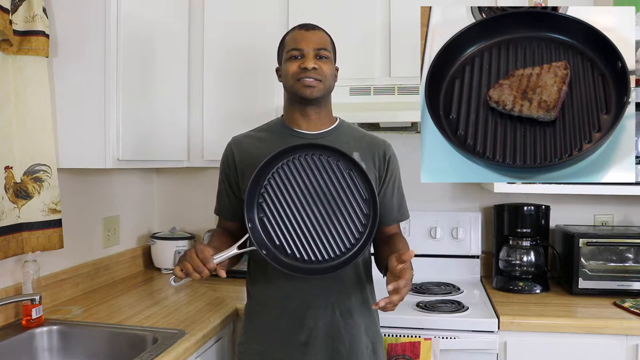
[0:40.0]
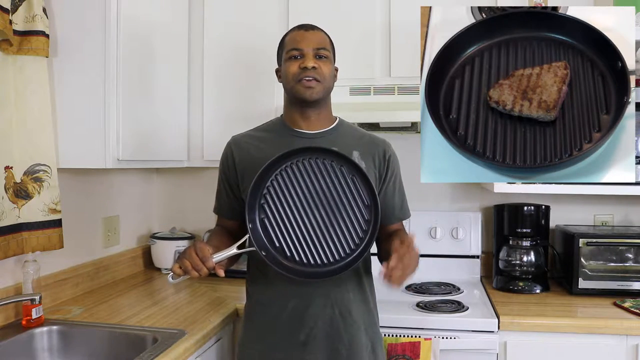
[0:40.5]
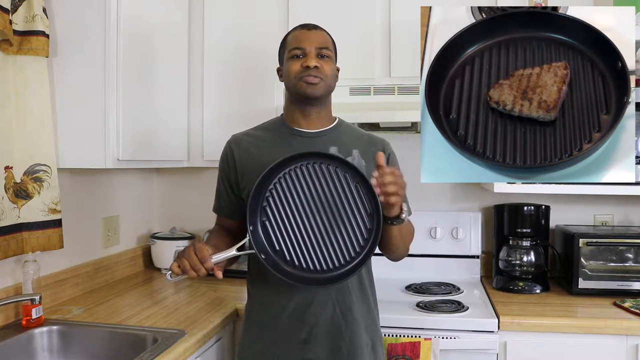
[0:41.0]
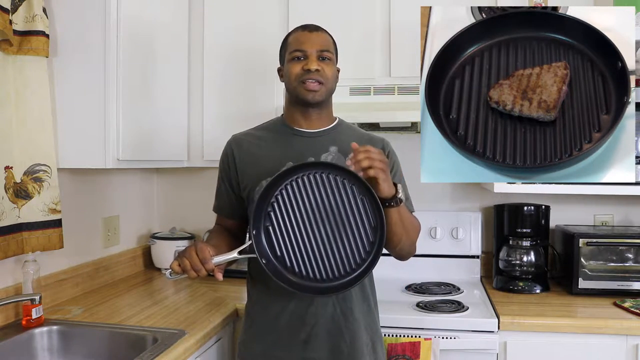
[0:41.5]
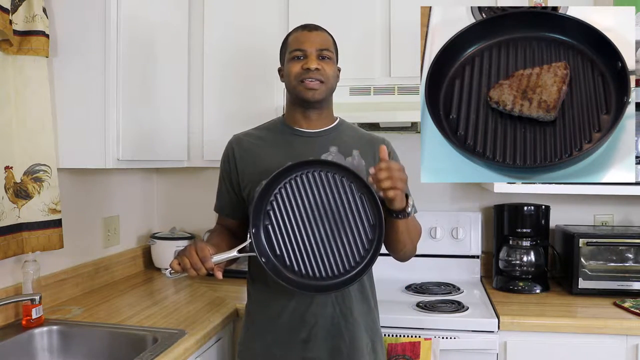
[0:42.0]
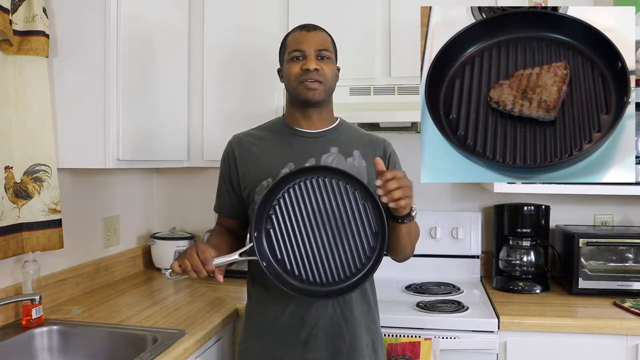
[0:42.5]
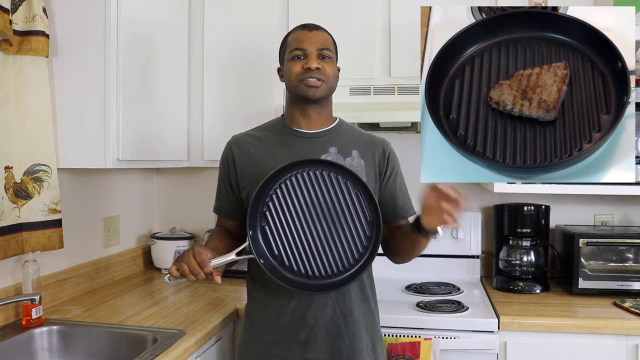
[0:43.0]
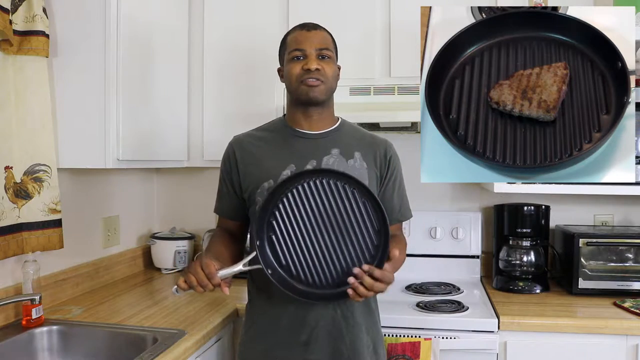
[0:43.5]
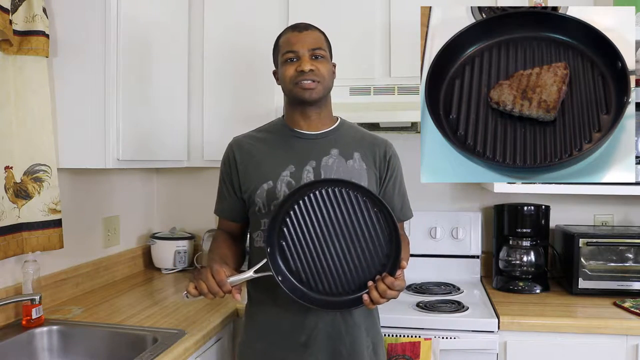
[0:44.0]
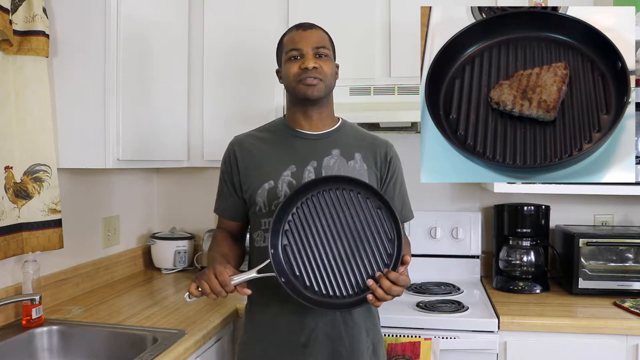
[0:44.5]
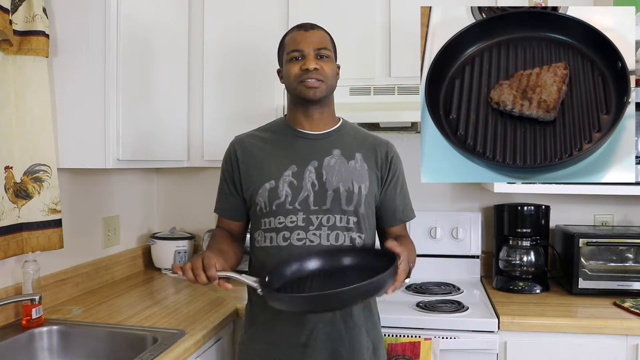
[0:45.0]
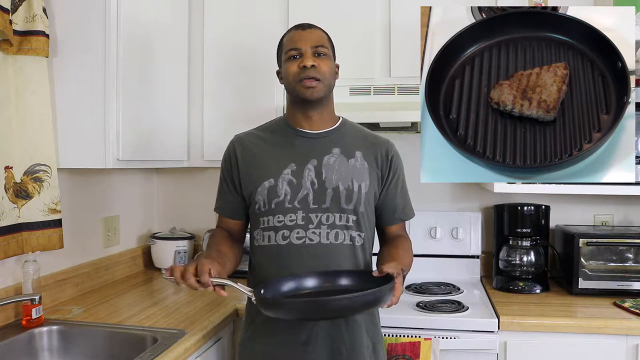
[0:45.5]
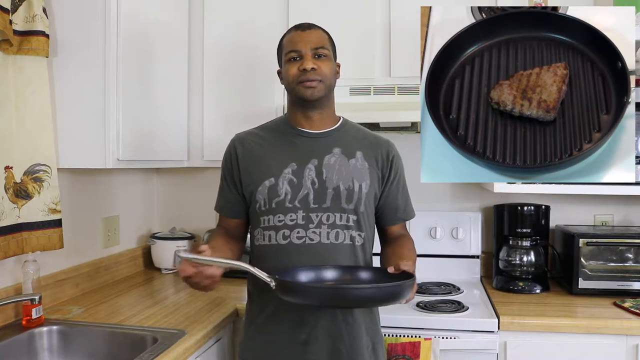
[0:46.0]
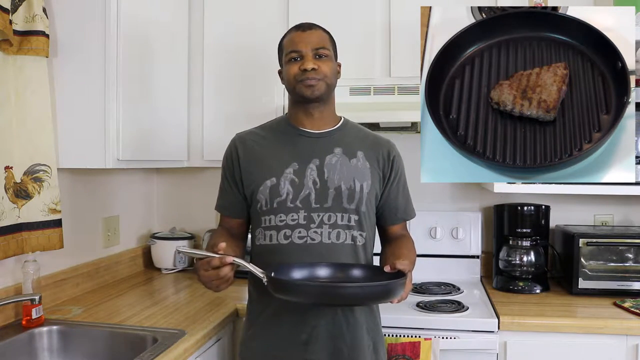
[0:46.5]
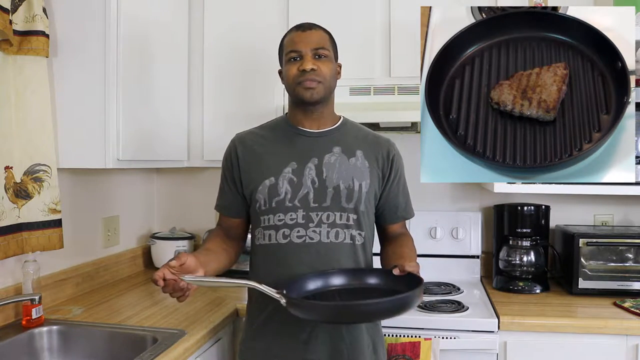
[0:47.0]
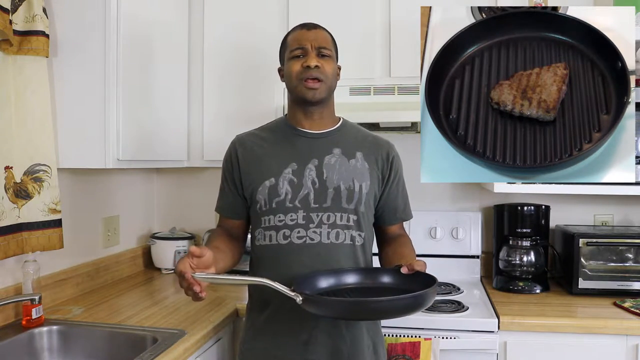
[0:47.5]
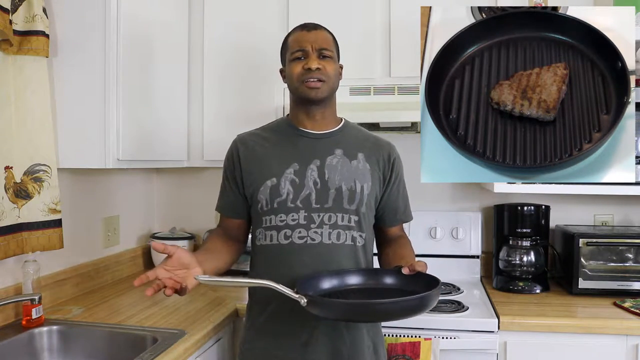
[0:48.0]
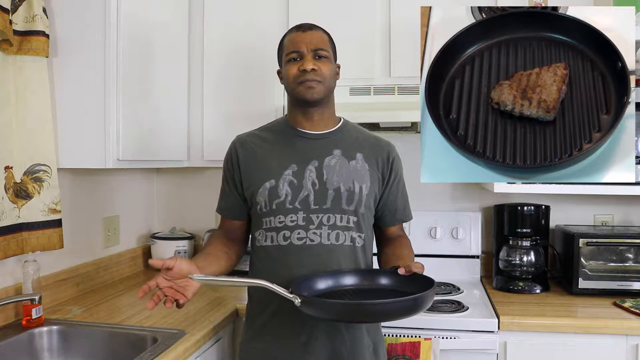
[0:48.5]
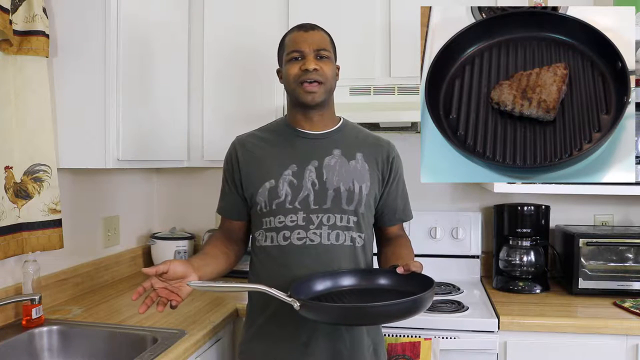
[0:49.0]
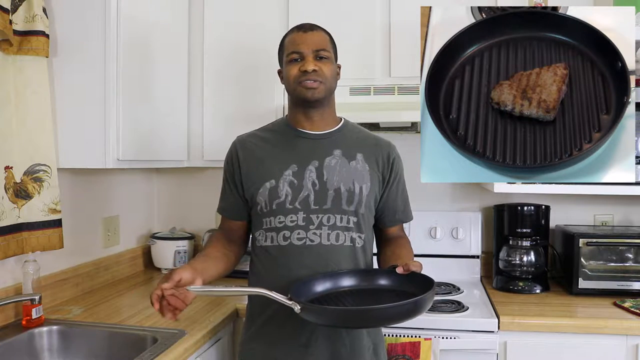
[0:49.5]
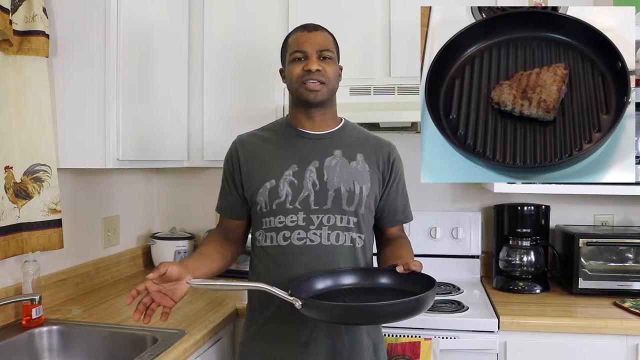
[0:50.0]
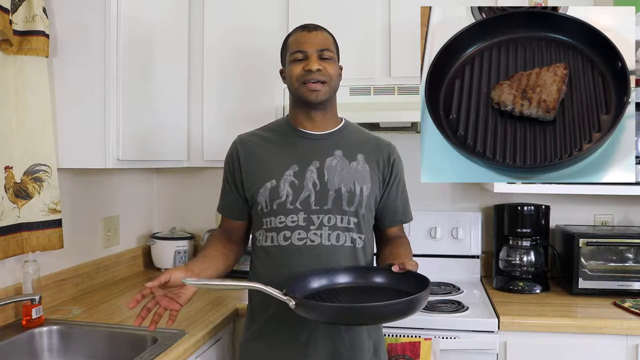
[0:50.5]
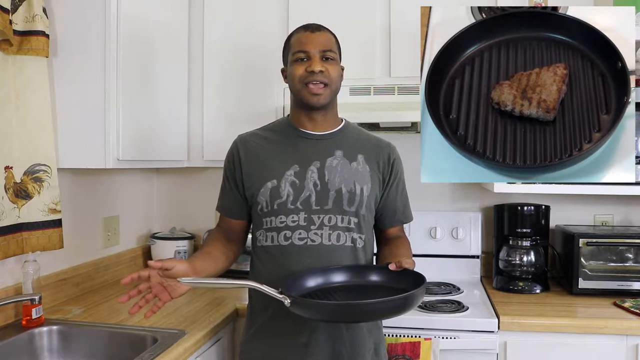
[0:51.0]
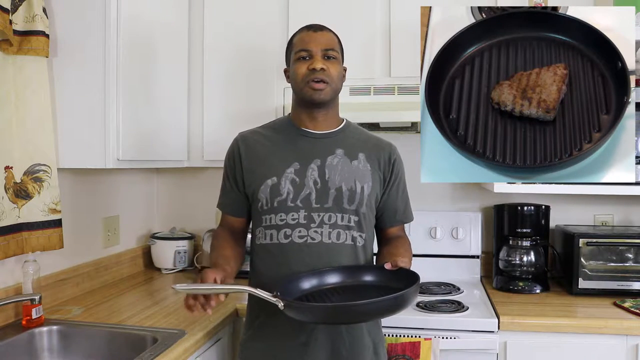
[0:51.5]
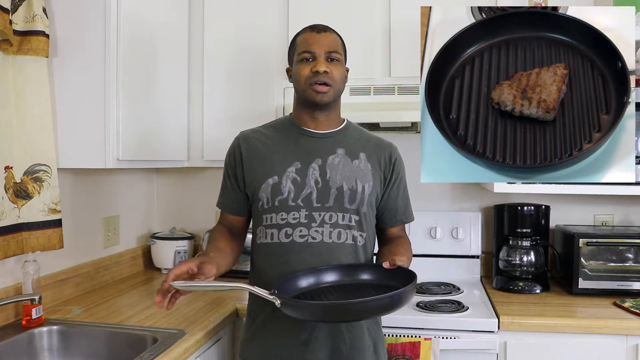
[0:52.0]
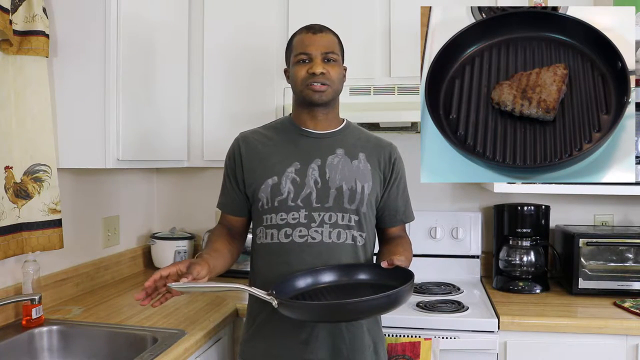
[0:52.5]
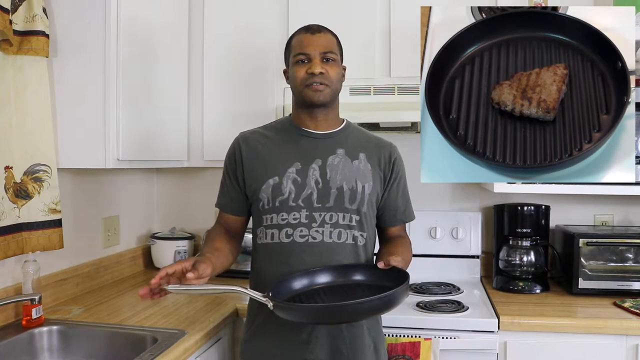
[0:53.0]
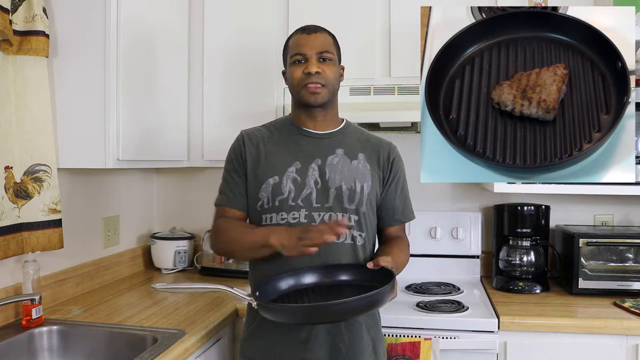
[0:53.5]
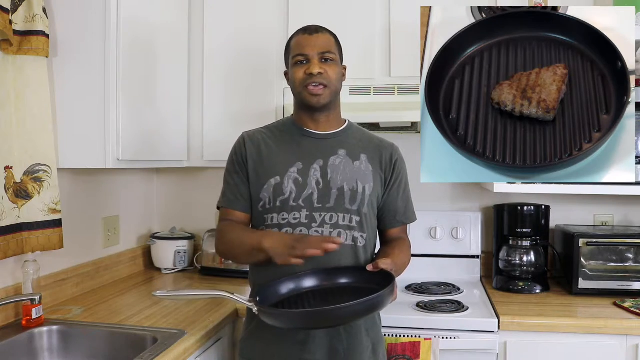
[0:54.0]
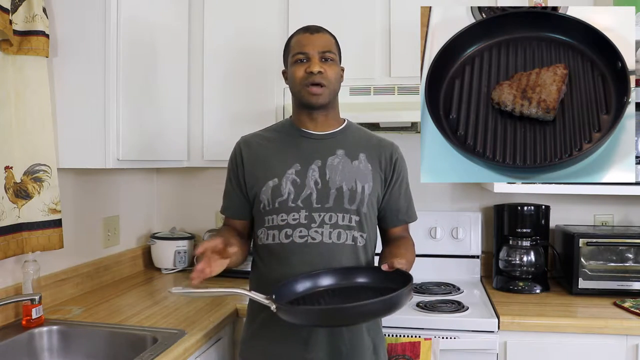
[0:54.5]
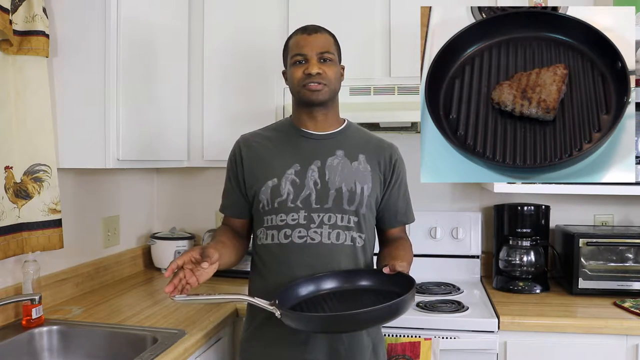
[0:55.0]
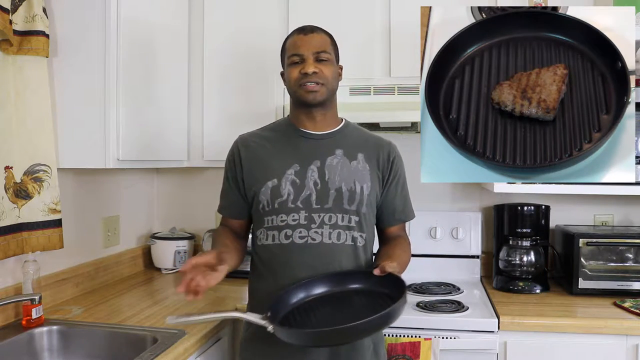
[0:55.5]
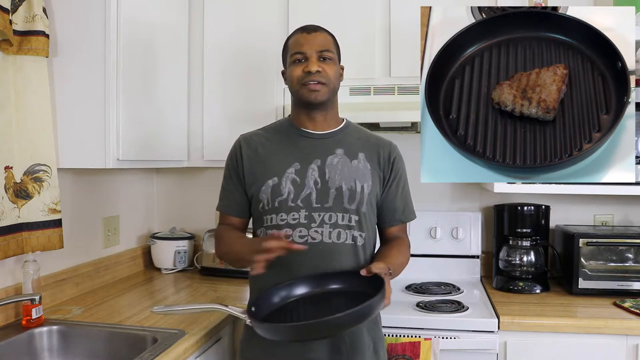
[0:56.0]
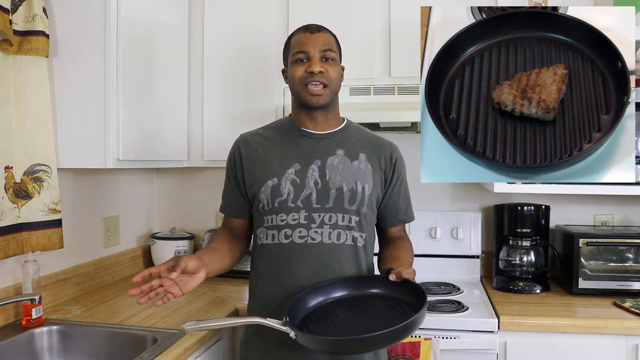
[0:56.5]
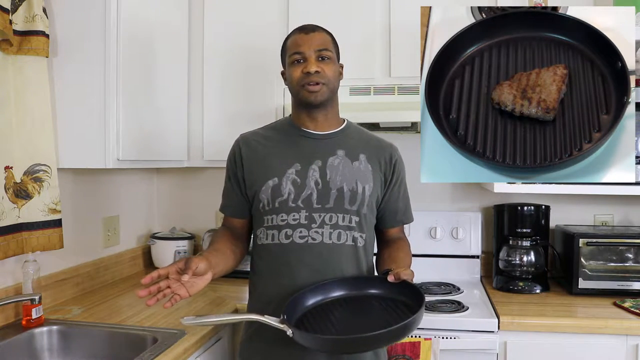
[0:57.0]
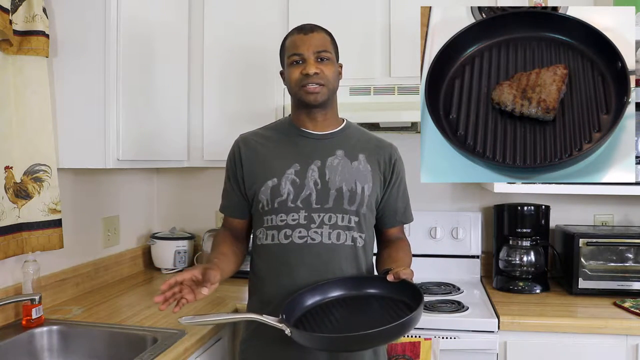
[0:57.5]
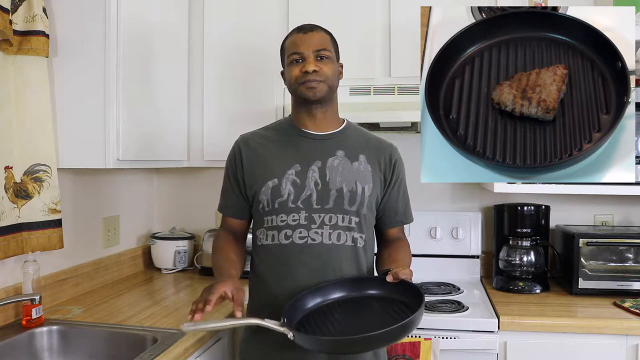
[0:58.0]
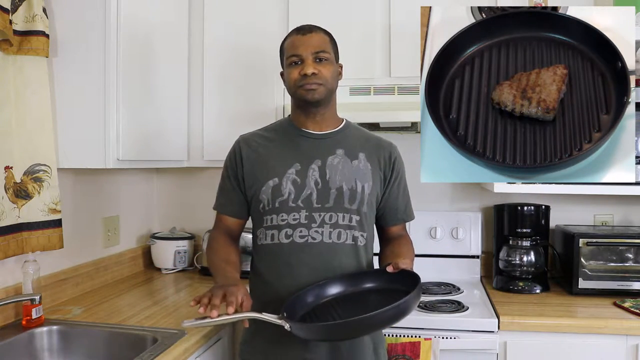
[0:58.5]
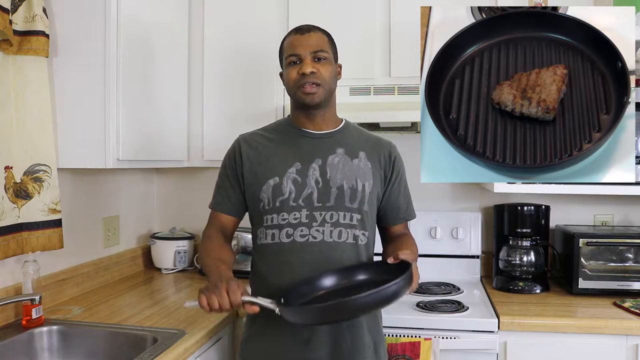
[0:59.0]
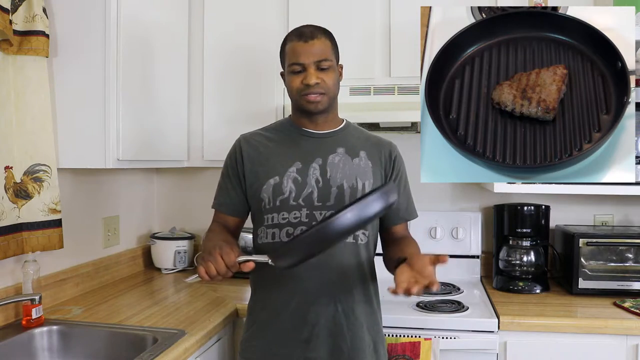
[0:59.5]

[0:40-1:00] A man stands in the kitchen. A video overlaid in the top right corner demonstrates the pan being used on top of a white stove. The pan has various grooves, and a steak that appears to be well done is inside it. The overlay is a time-lapse, and the steak slowly shrinks as it cooks in the pan. In the main video, the man talks directly to the camera. He wears a gray shirt printed with an image of the evolution chain for humans, with "meet your ancestors" written below it. He holds the pan by the handle with his right hand and supports it with his left hand, then moves the pan to his left hand and holds it with only one hand.